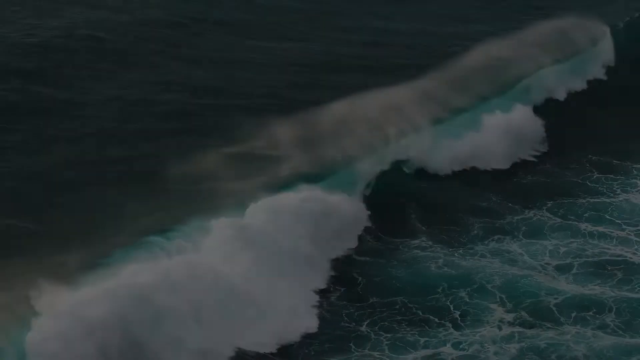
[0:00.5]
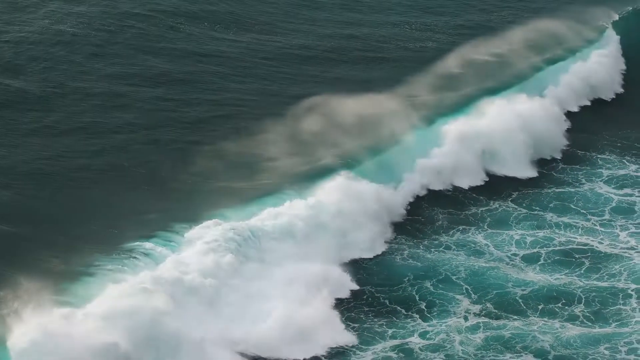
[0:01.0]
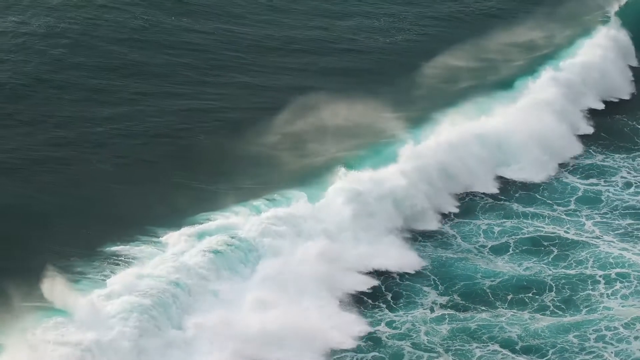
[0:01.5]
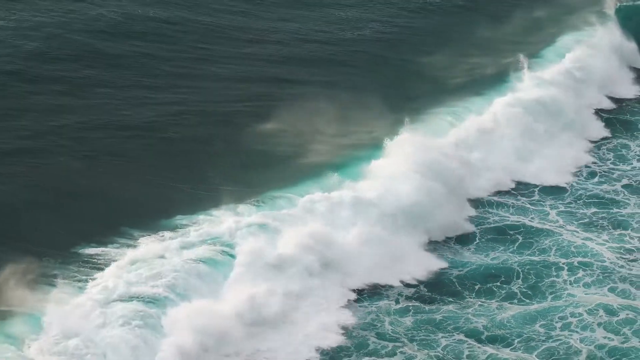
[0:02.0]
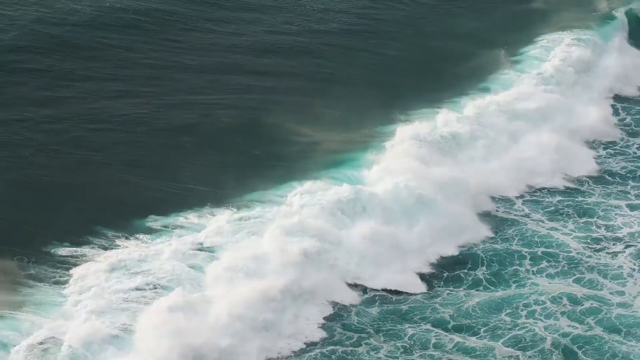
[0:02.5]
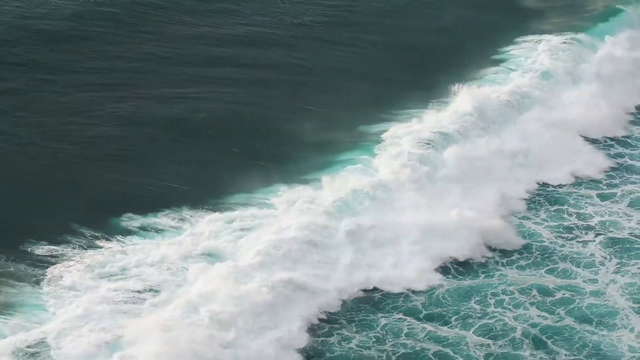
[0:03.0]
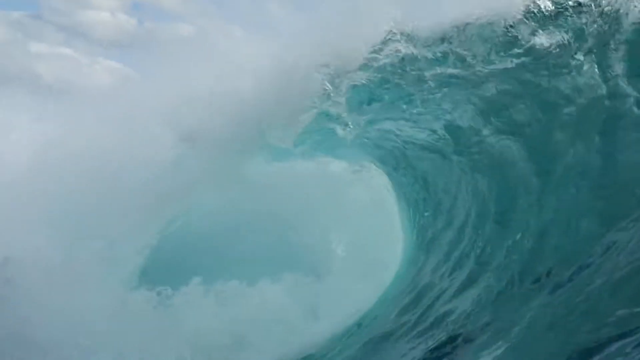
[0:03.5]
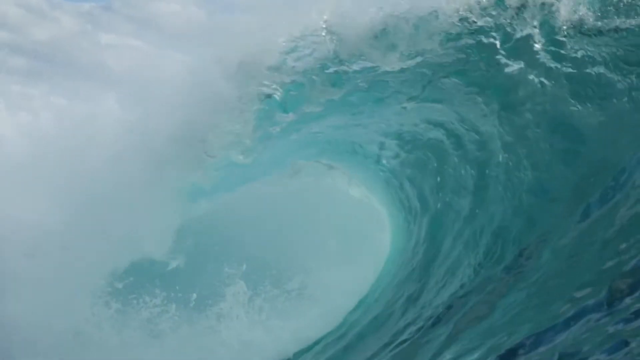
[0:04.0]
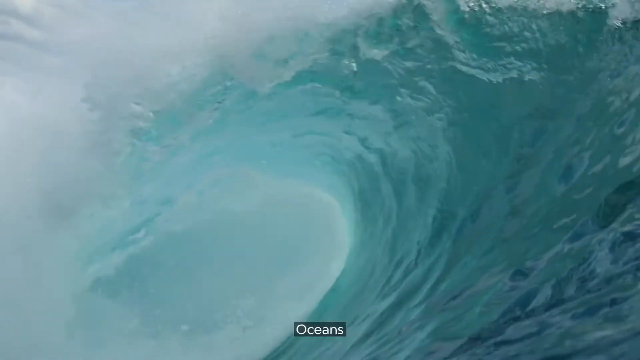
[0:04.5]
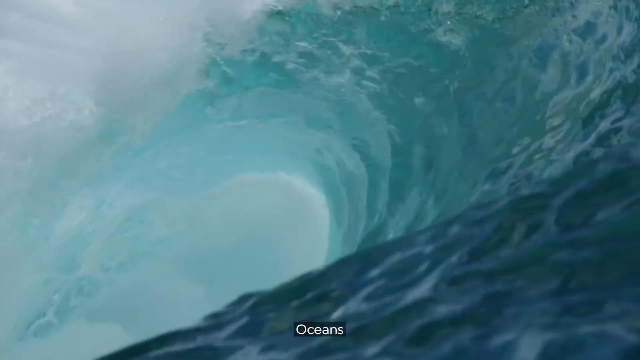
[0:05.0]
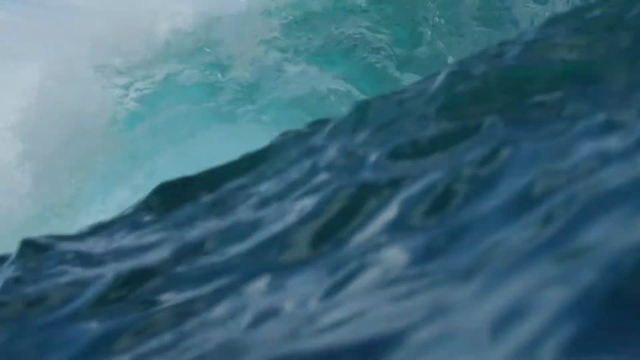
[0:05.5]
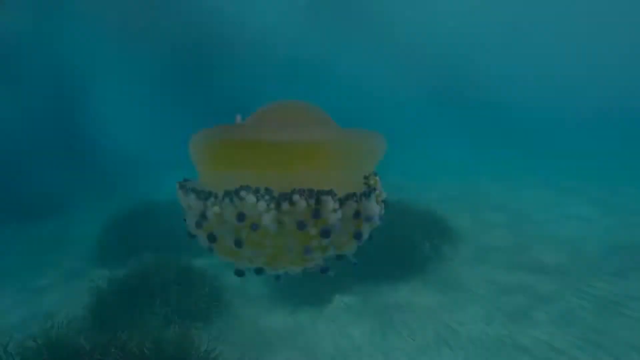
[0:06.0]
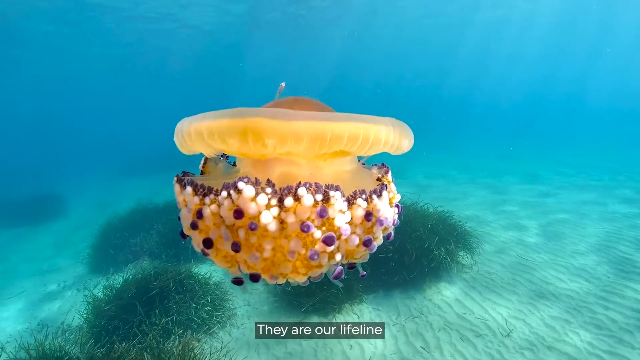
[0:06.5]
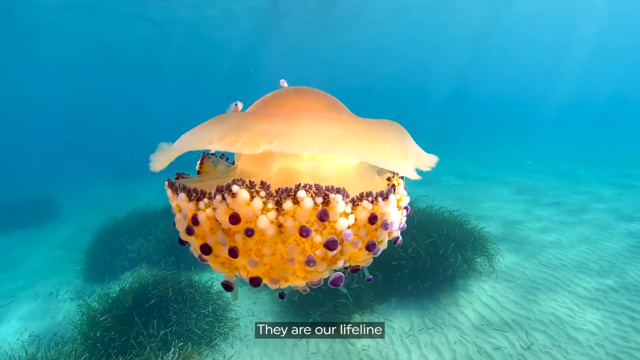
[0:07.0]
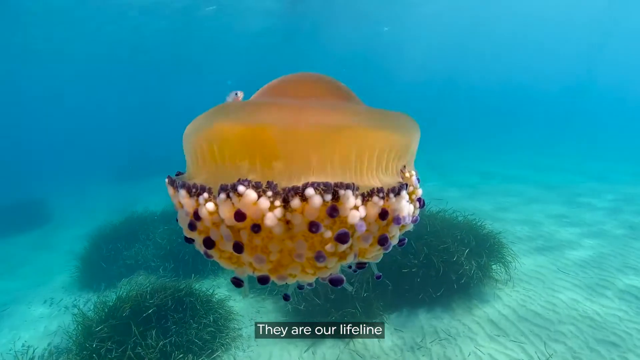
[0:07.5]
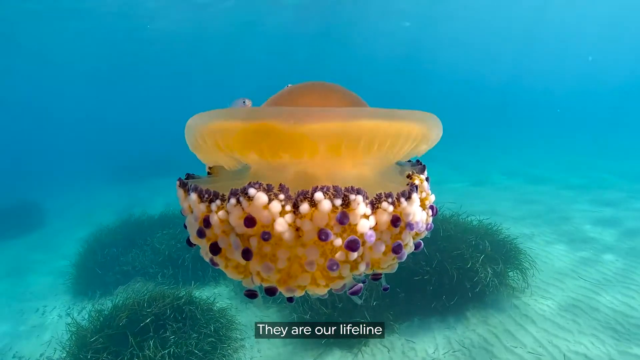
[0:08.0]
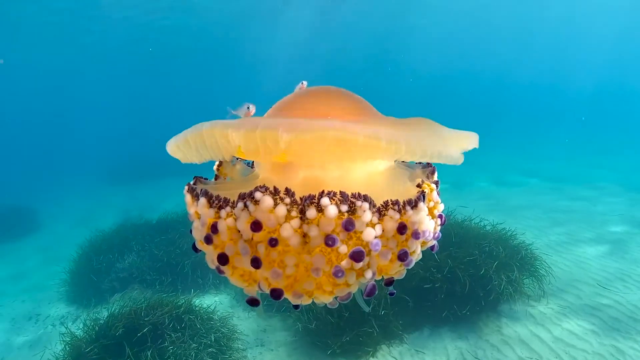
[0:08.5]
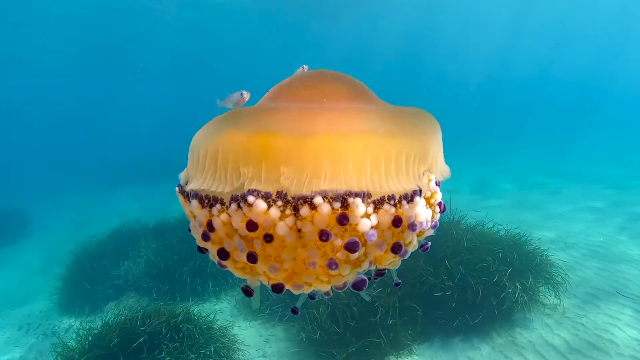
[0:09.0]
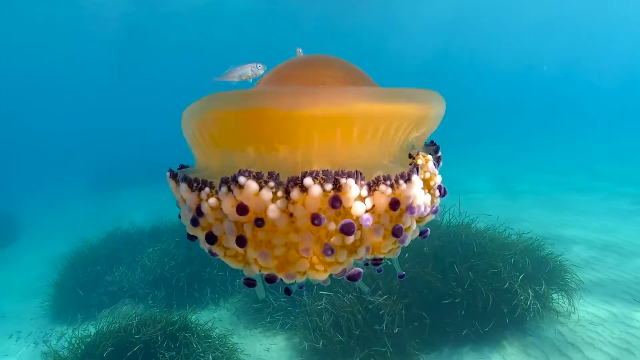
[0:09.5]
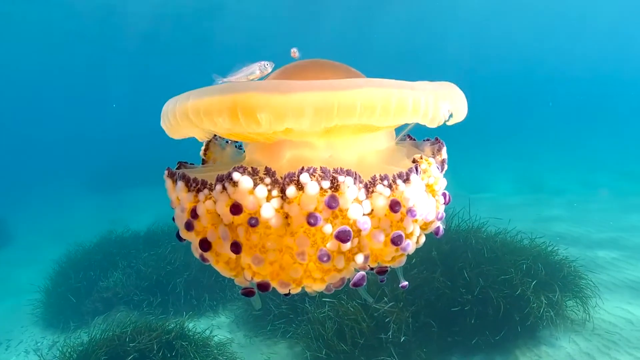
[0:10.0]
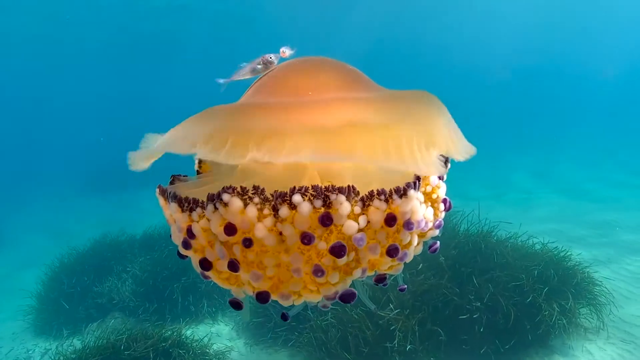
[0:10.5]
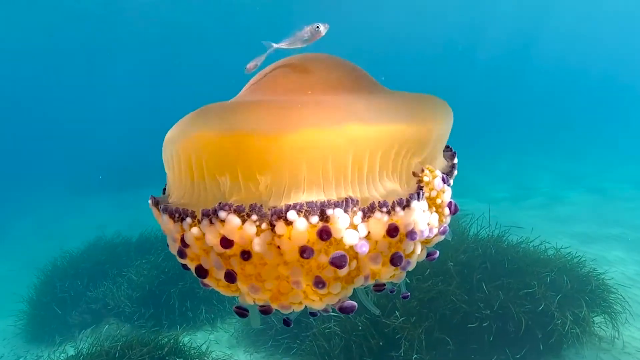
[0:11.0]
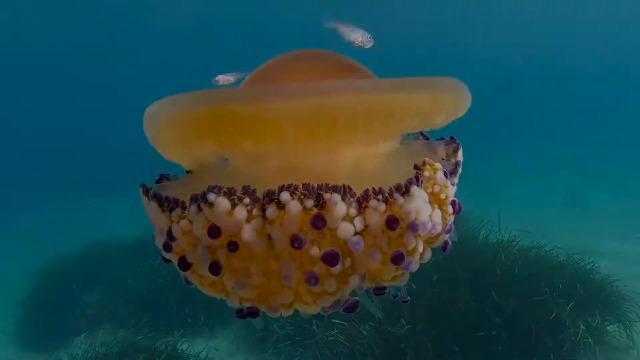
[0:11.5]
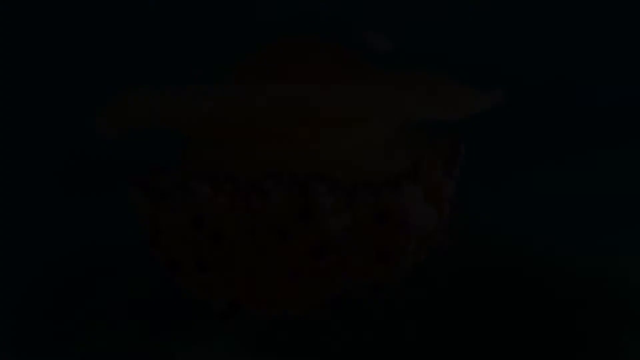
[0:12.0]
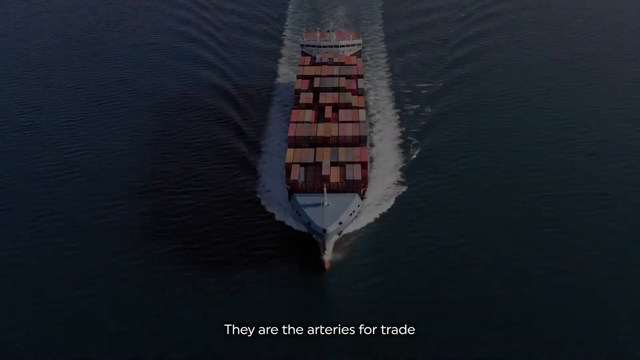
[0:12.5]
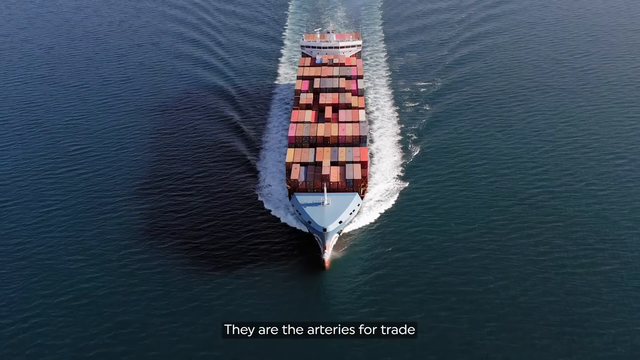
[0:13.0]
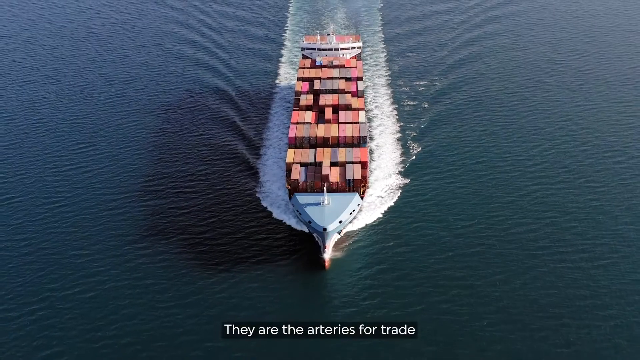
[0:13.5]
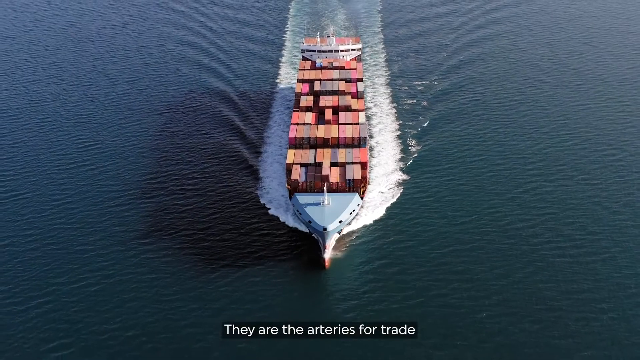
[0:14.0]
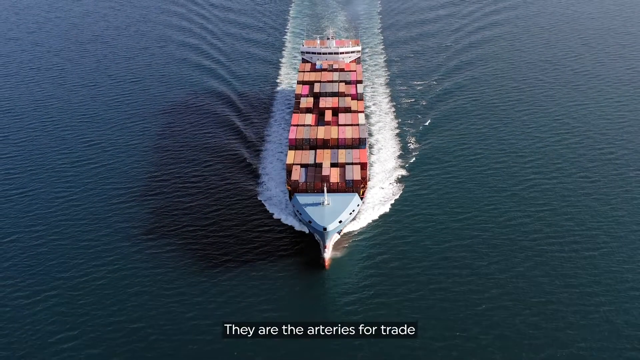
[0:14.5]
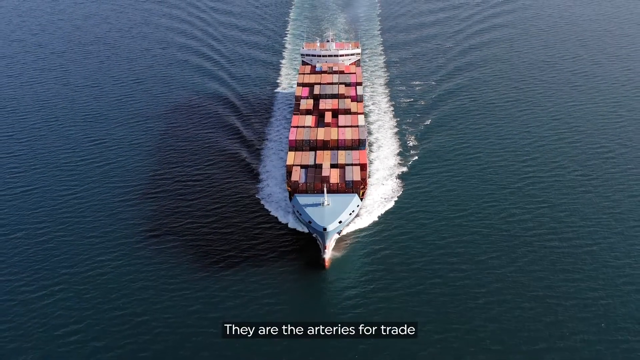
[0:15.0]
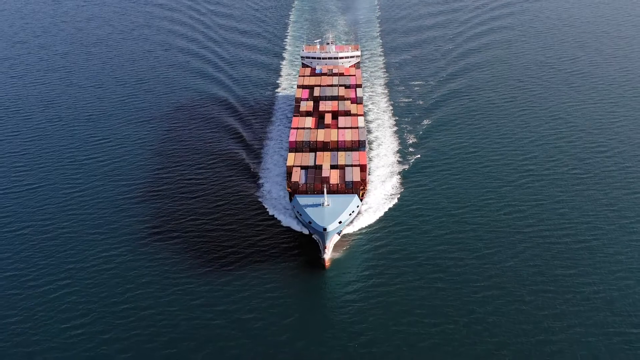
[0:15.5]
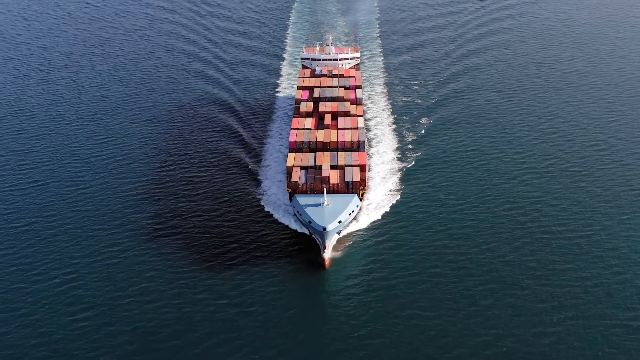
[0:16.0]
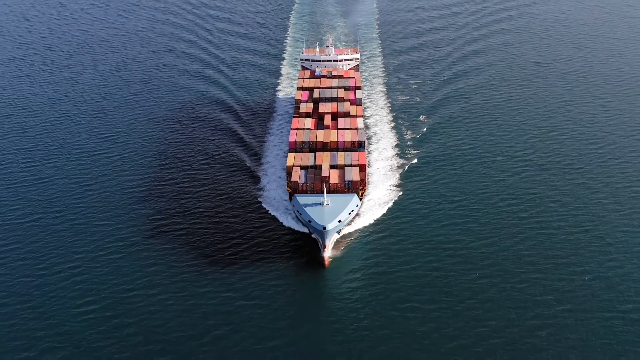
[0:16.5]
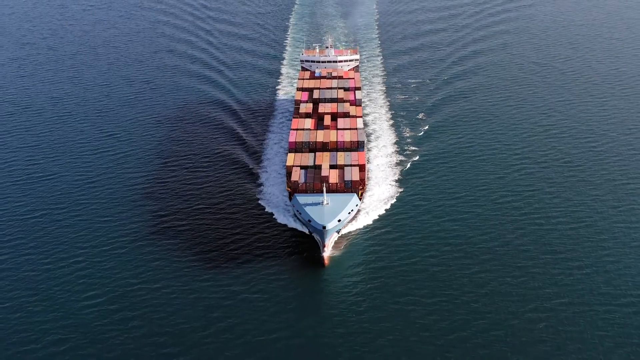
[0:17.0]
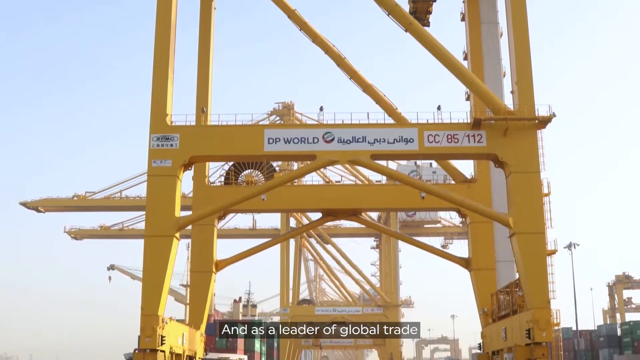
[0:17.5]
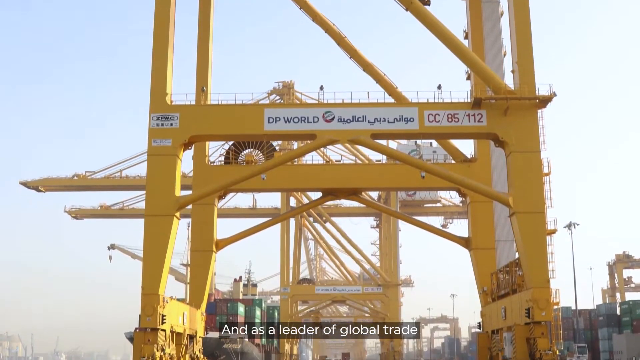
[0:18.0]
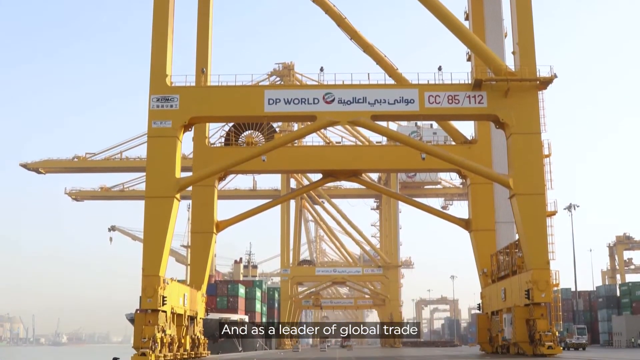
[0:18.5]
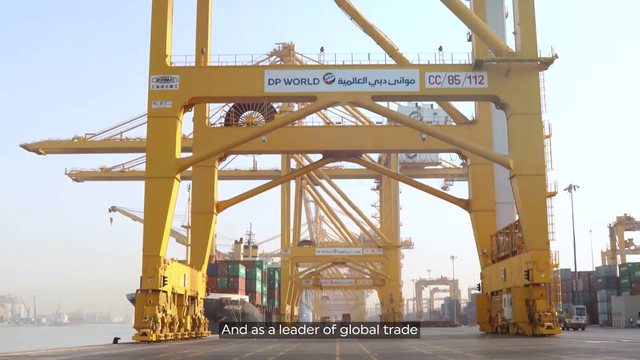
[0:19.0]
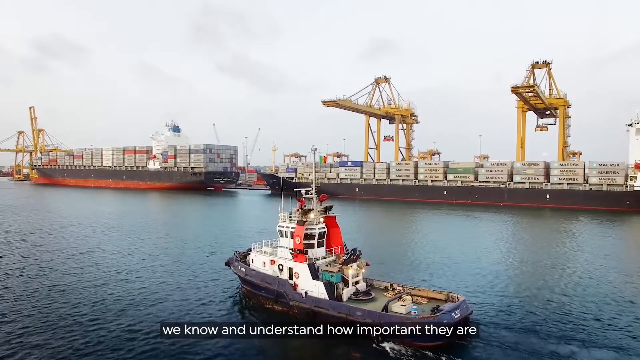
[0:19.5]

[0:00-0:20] A rolling wave moves in from the top left of the screen and rolls across towards the right. There is a lot of sea foam, with darker sea on the left of the picture and greener sea on the right. The wave breaks, and a second wave follows directly, this time coming in from the right side; it is a big surfing wave rolling across the screen. Next comes a live marine creature, either a jellyfish or some sort of anemone, in the centre of the screen, moving its tentacles up and down as it moves along the seafloor. The screen turns to black and comes back on a large container ship moving from the top towards the bottom of the screen, cutting through the waves with lots of different coloured containers on board and waves visible behind it. The scene moves to a dock with a yellow crane, then pulls out to show the whole dock: boats coming in, the container ship, cranes for loading, and what looks like a Coast Guard ship coming in across the bottom of the screen.